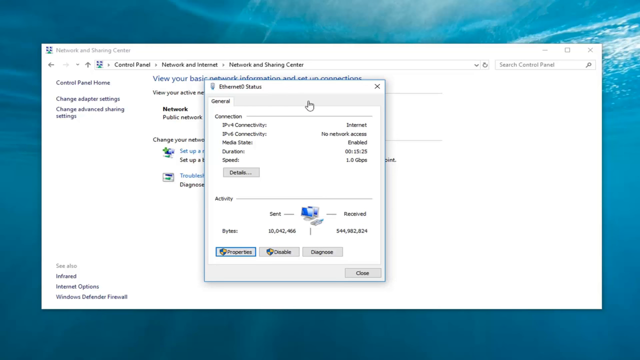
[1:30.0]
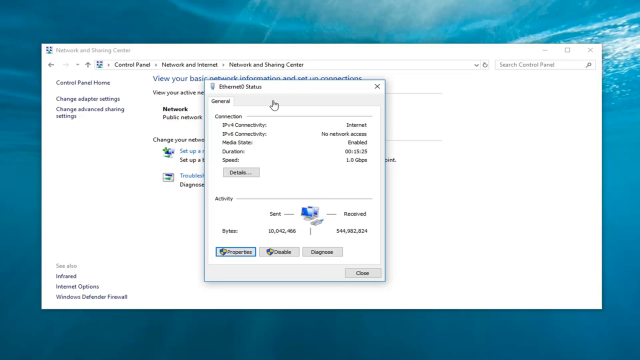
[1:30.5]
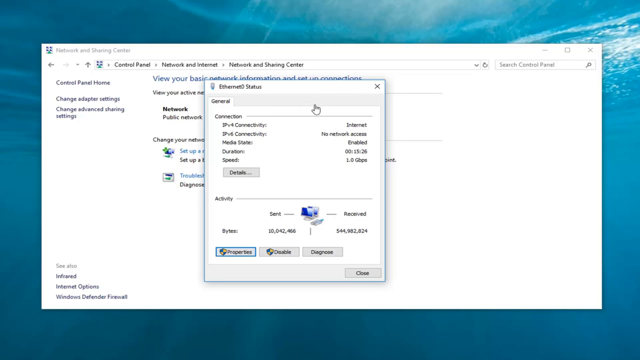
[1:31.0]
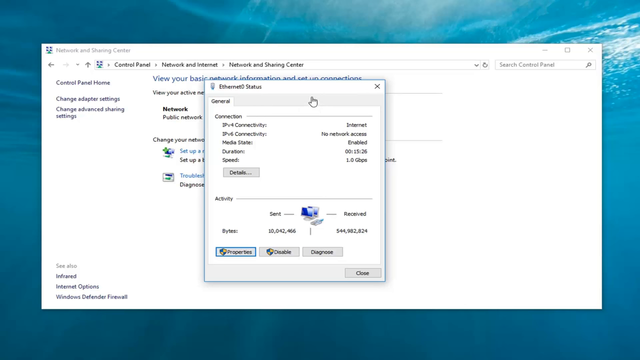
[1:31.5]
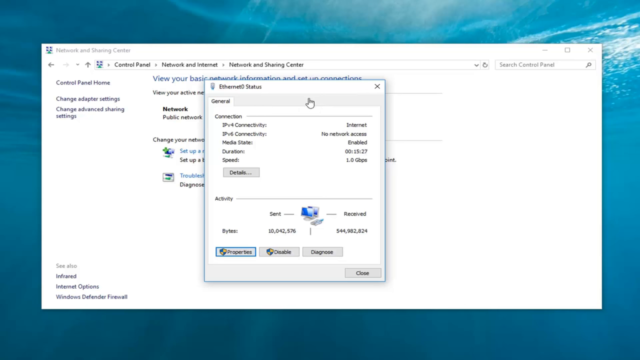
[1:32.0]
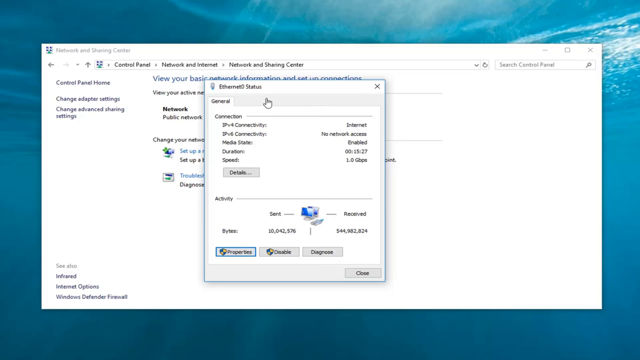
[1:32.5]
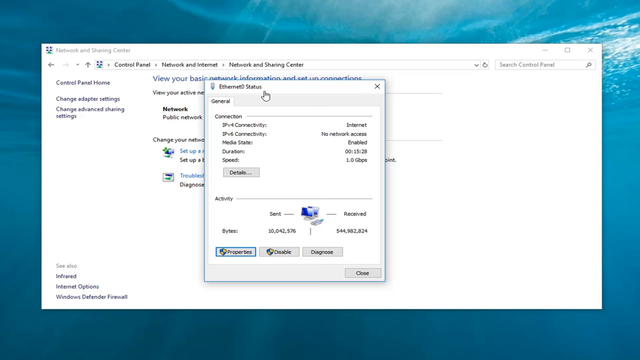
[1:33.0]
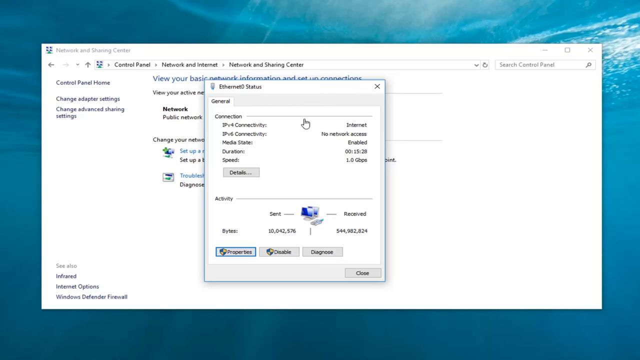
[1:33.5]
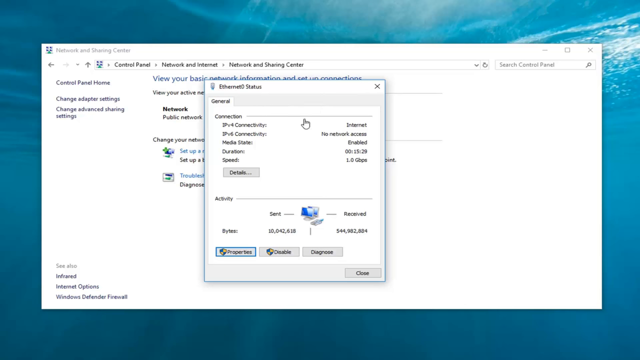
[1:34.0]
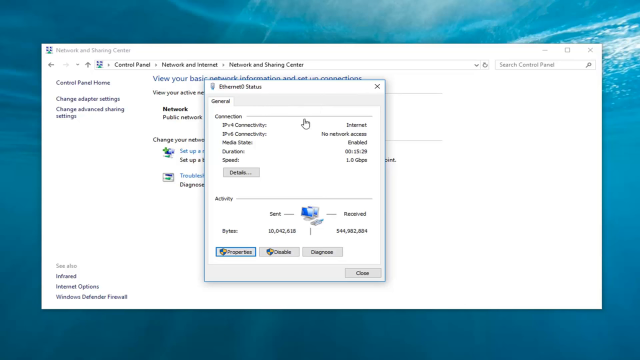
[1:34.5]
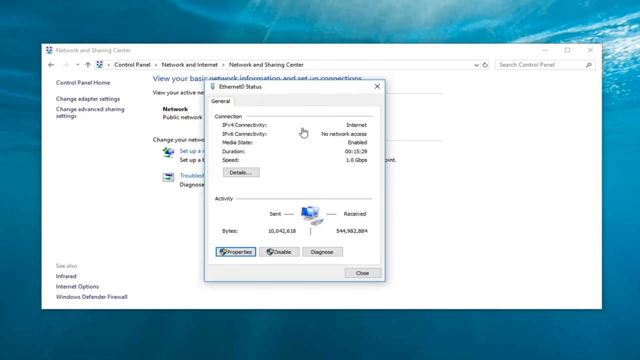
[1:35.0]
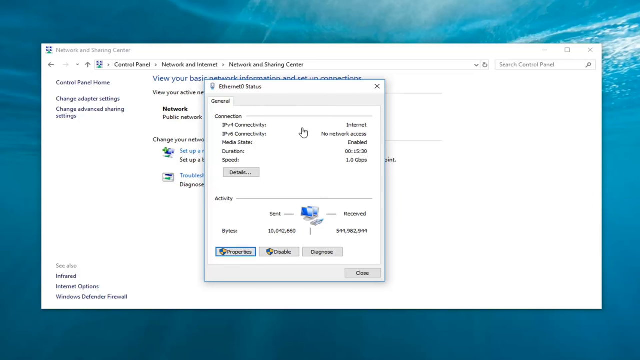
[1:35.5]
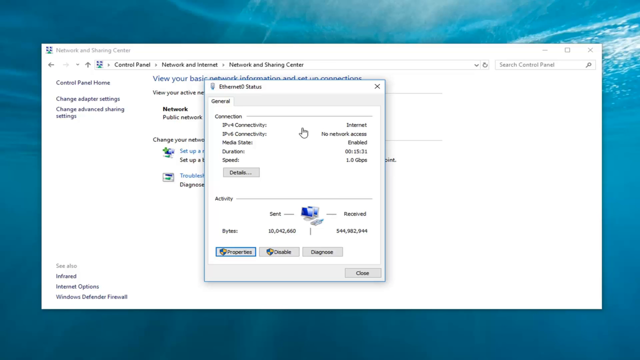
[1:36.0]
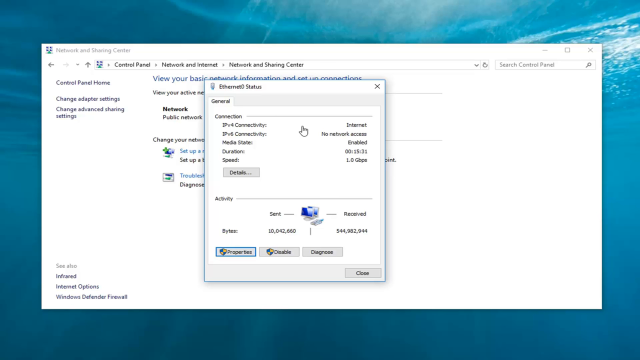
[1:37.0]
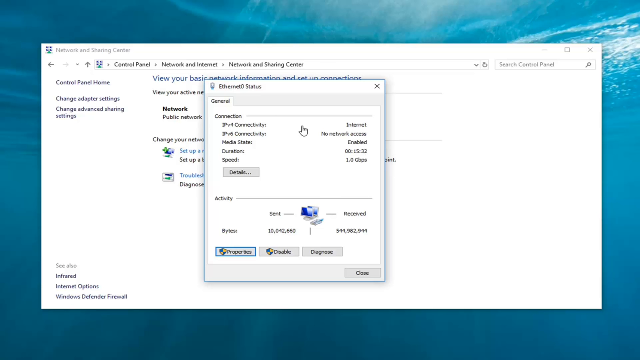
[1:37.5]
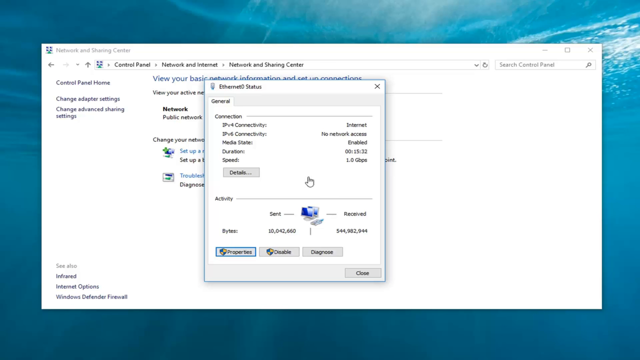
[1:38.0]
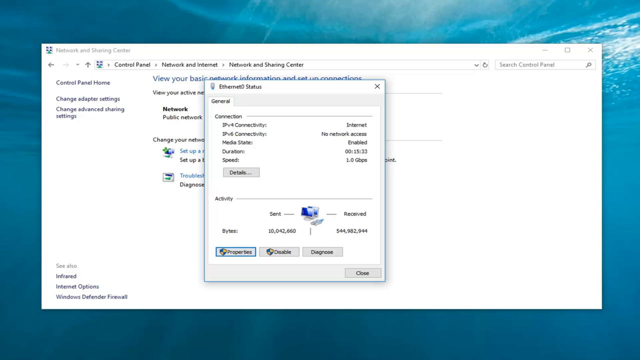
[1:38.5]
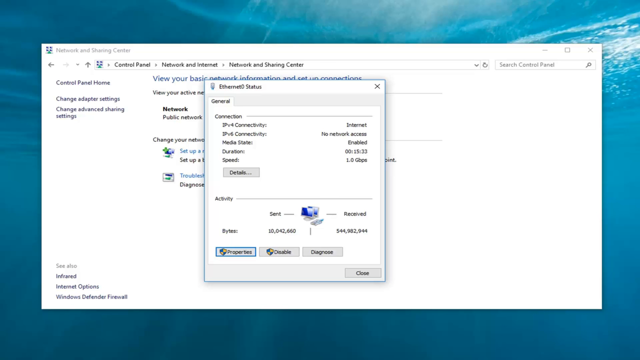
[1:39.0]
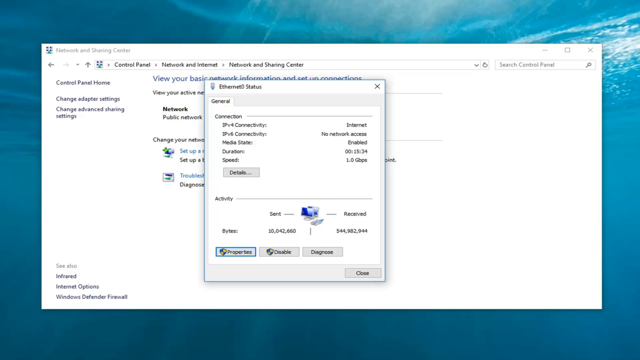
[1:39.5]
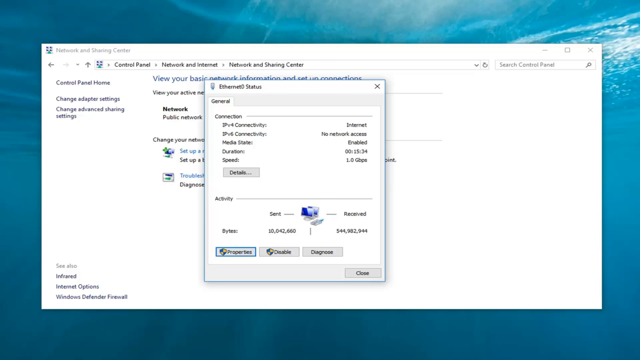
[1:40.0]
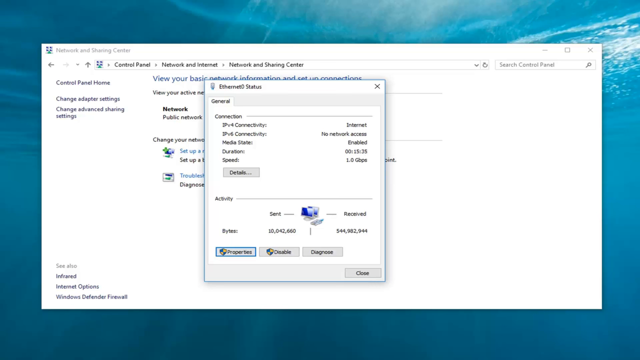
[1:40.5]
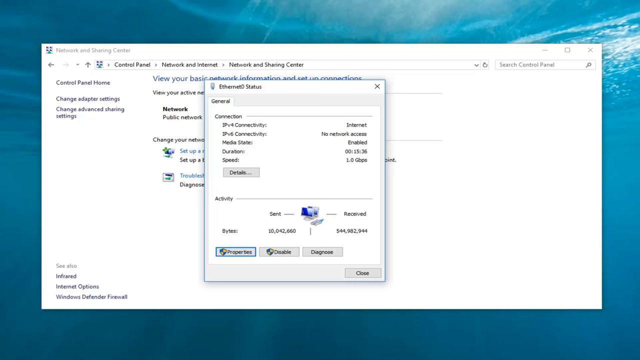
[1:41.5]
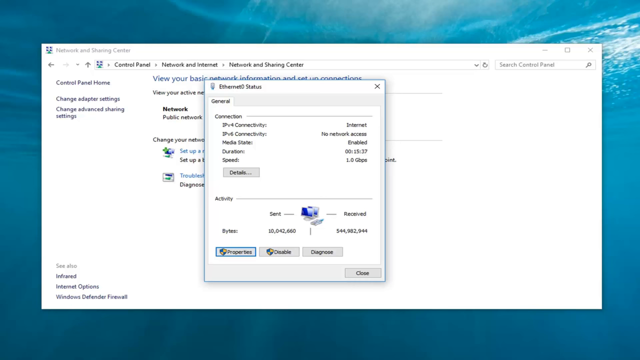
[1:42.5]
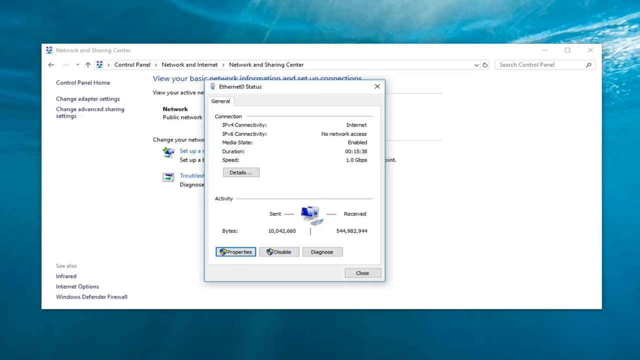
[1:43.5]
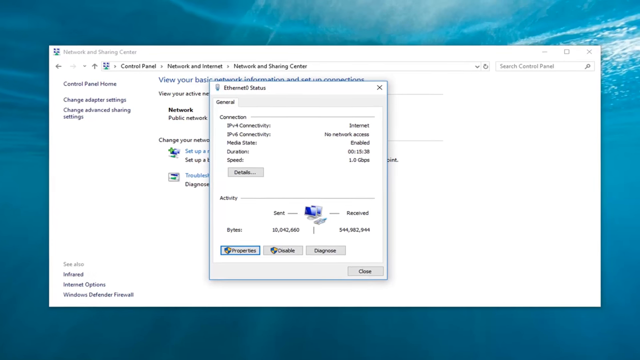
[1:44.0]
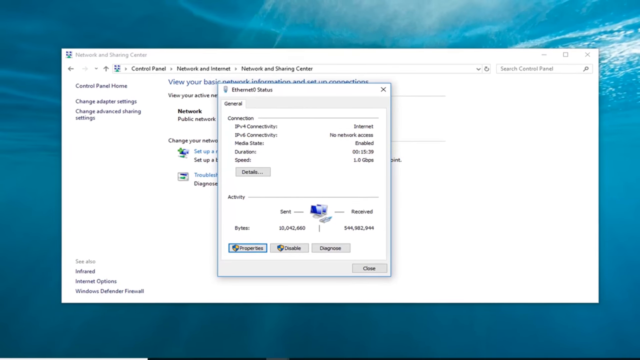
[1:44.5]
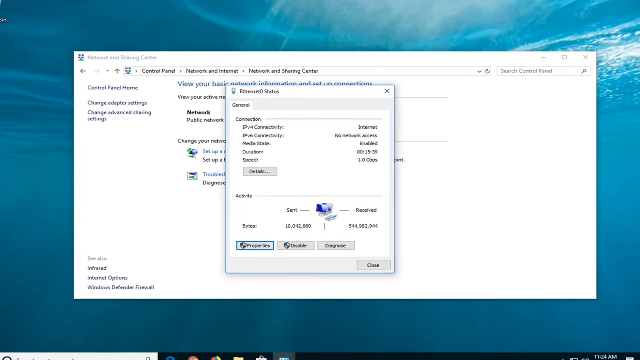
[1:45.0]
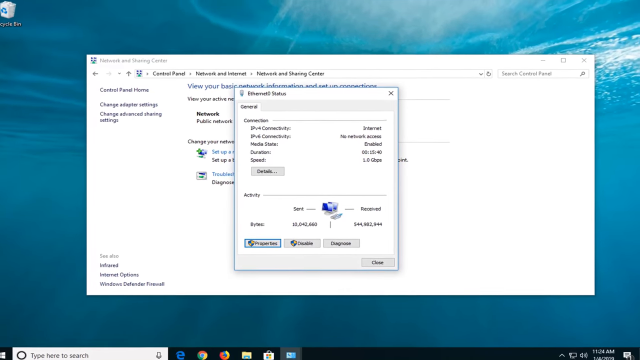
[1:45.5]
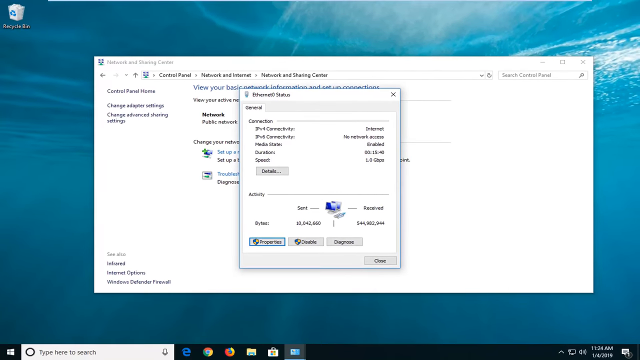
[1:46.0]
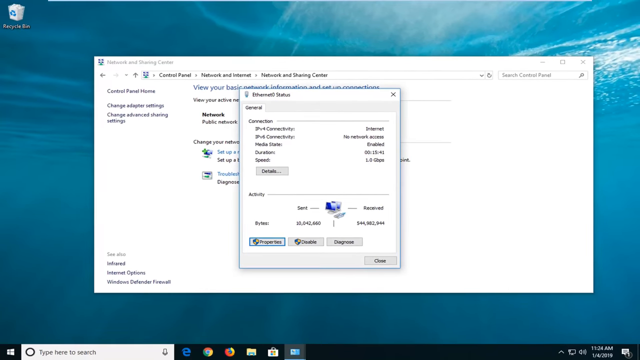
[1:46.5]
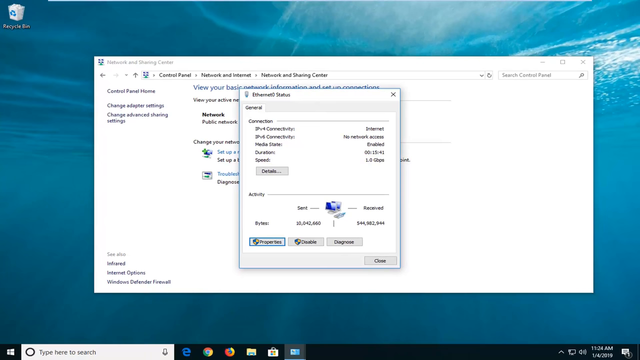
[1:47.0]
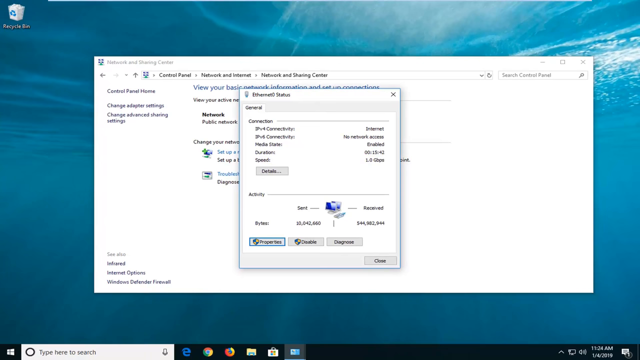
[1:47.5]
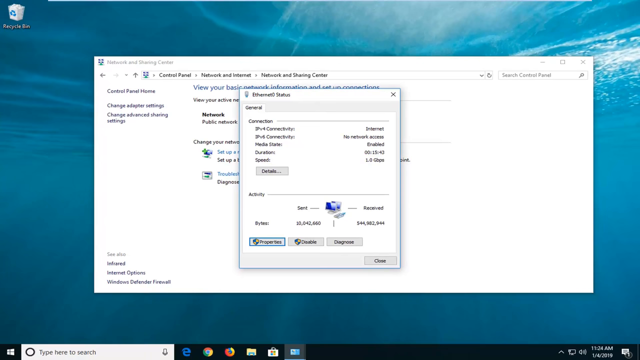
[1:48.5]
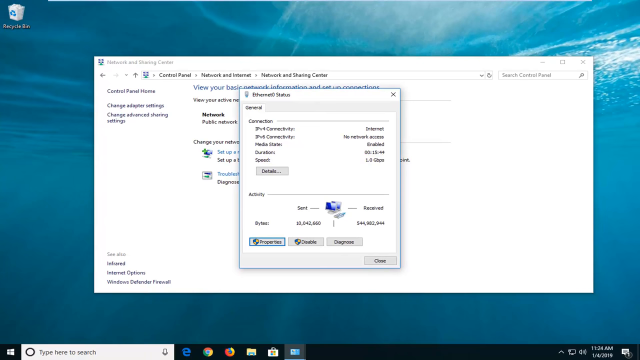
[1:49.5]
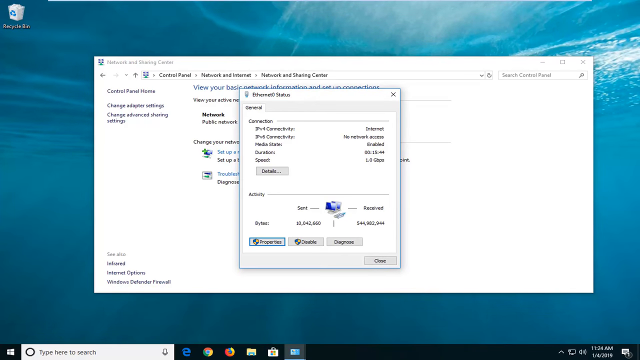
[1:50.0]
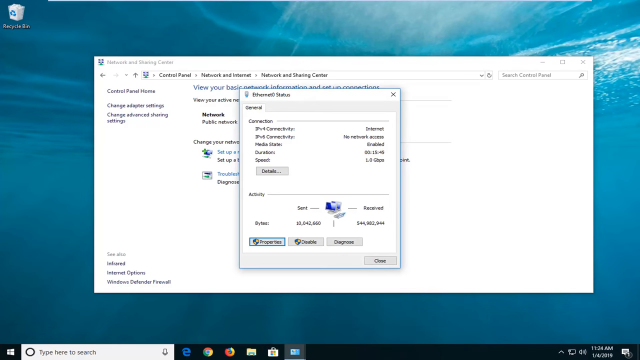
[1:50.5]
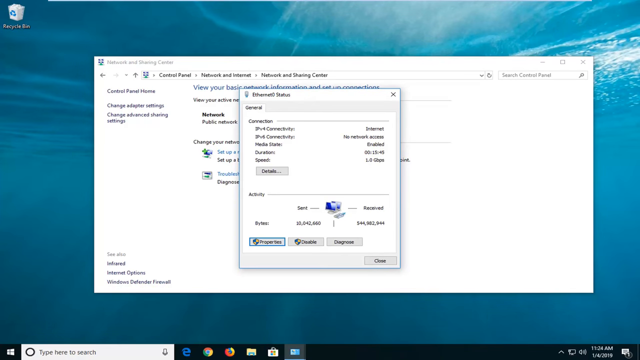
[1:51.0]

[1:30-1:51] The mouse hovers over the Ethernet status, looking at finer details of the connection and connectivity. The mouse then scrolls and the view pulls away from the window, zooming out to a more expansive view of the entire screen, someone's desktop. The Recycle Bin is in the top left, with program logos below it, including Google Chrome, a file folder, Internet Explorer and possibly Firefox. The Windows logo is in the bottom left.